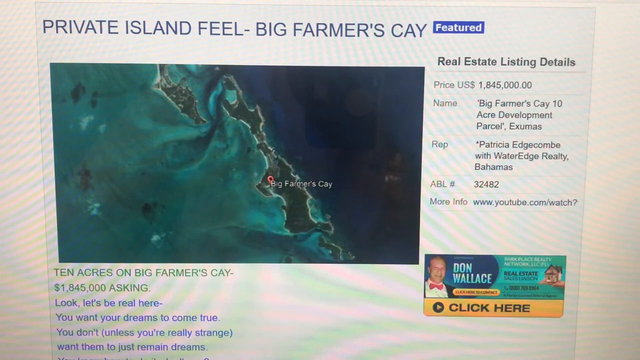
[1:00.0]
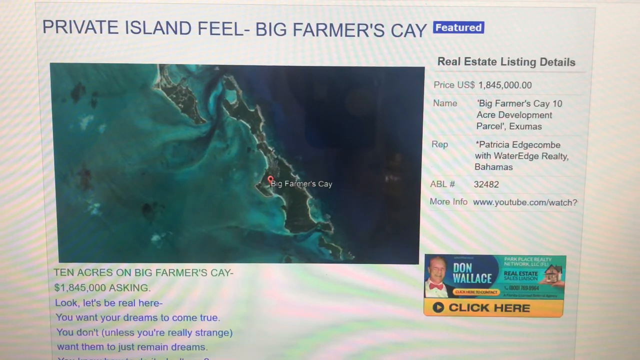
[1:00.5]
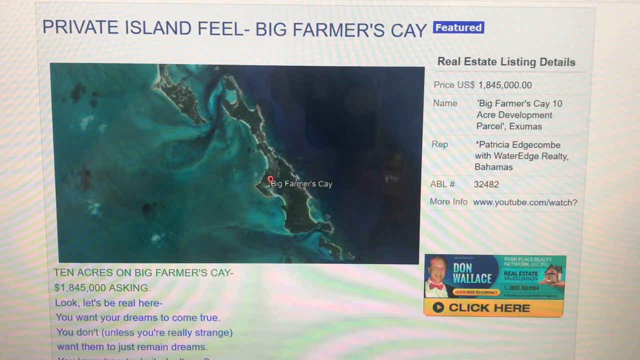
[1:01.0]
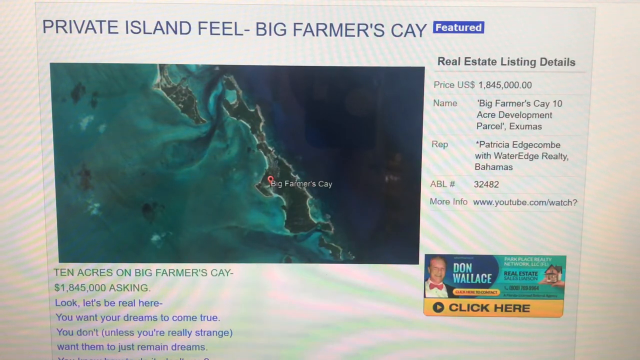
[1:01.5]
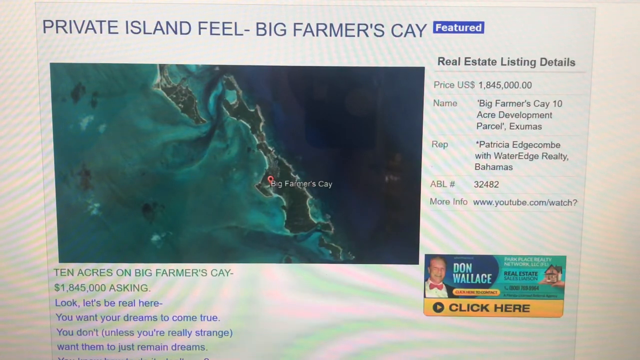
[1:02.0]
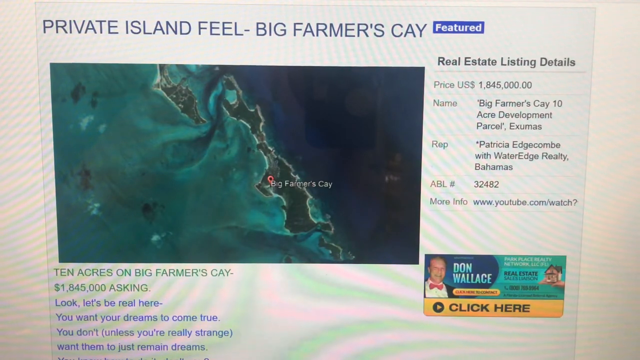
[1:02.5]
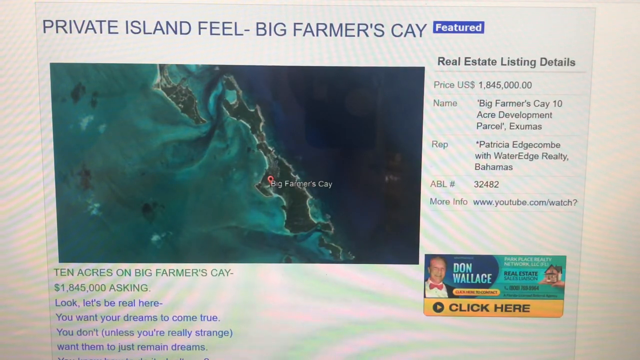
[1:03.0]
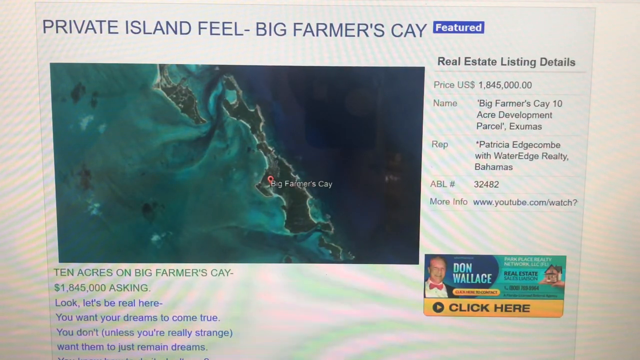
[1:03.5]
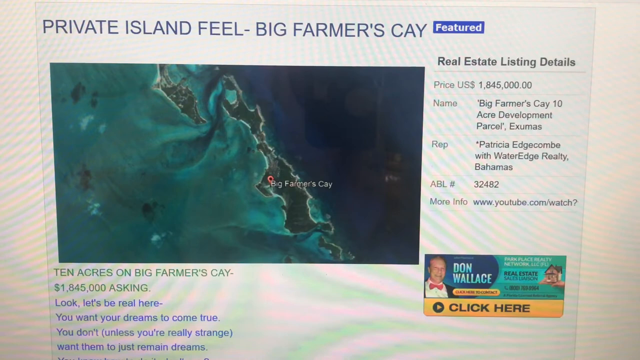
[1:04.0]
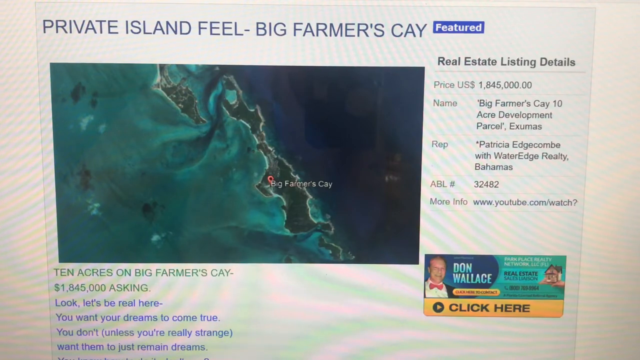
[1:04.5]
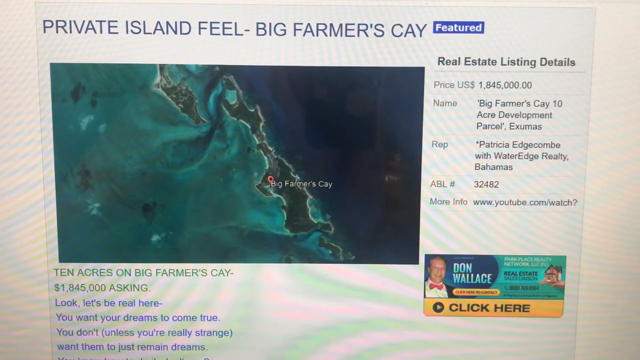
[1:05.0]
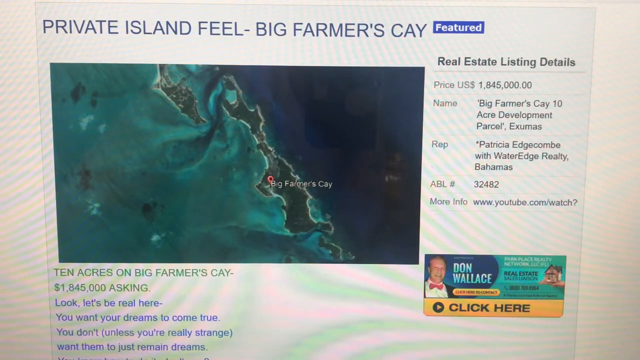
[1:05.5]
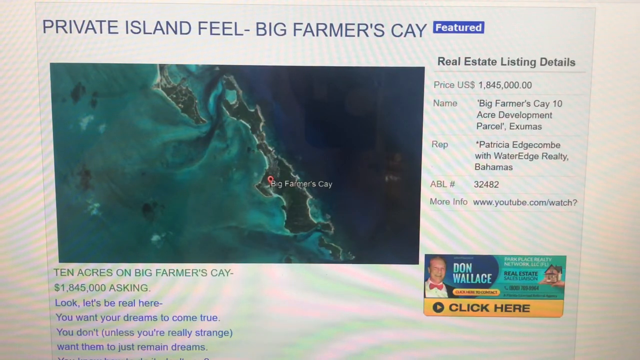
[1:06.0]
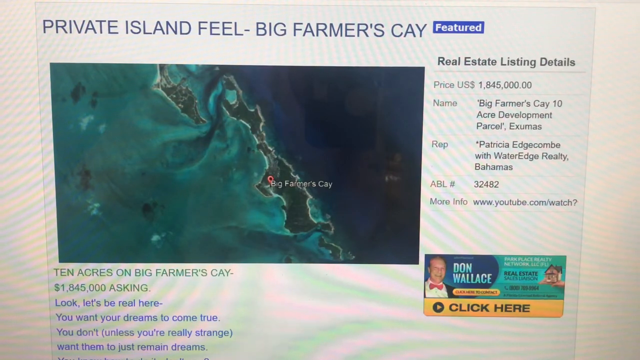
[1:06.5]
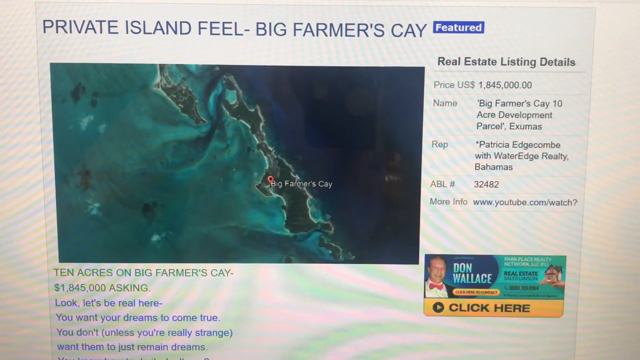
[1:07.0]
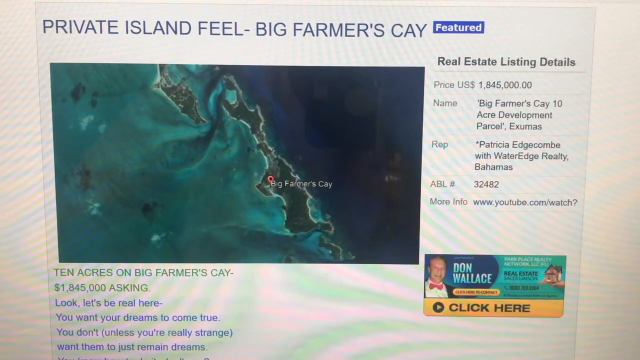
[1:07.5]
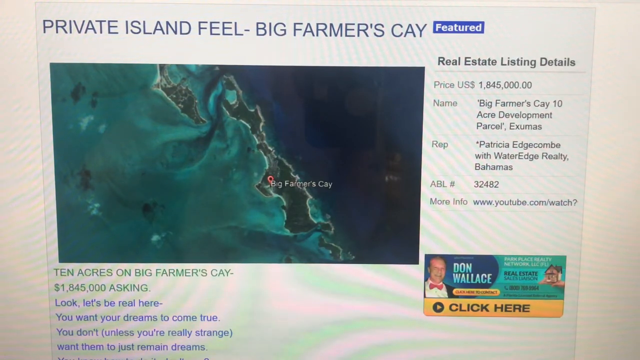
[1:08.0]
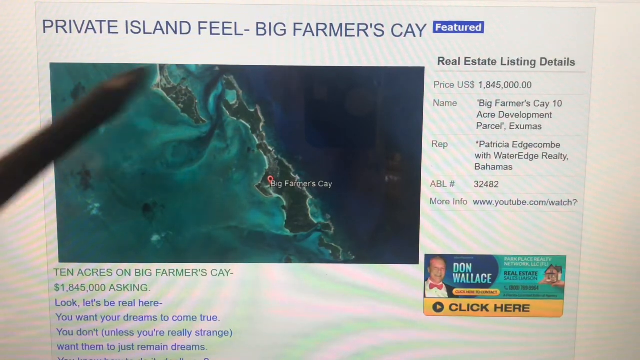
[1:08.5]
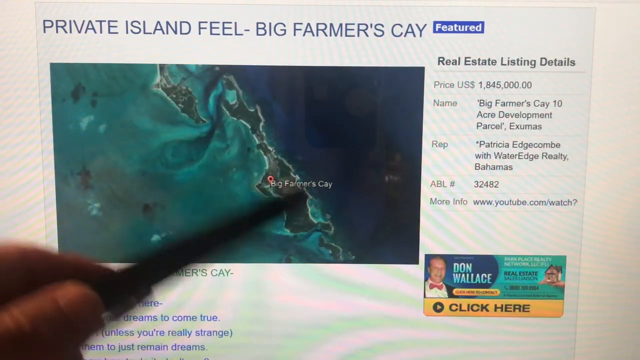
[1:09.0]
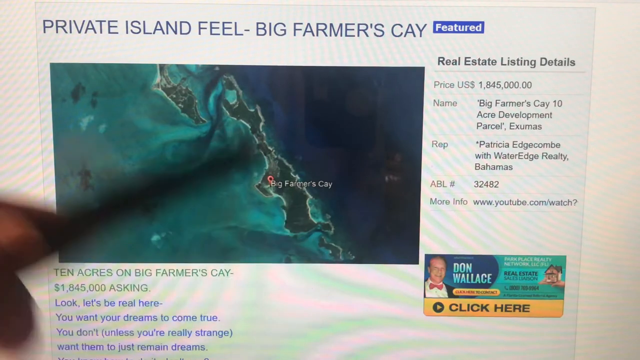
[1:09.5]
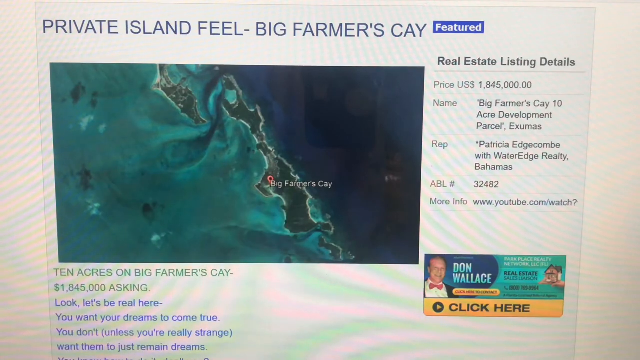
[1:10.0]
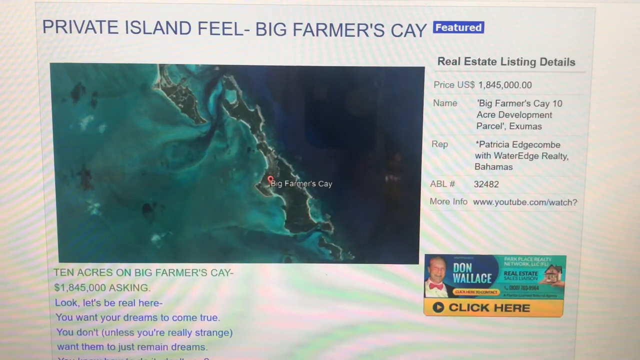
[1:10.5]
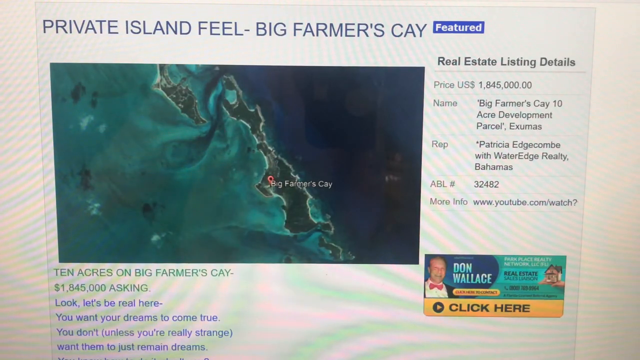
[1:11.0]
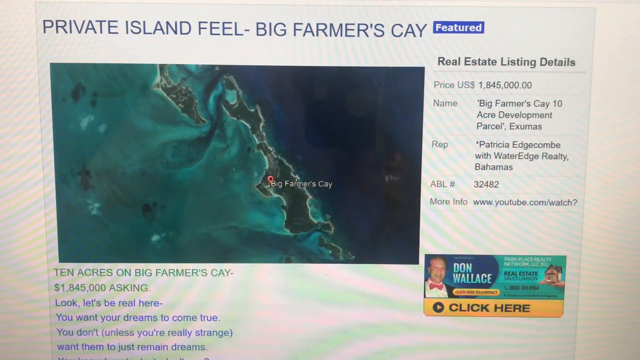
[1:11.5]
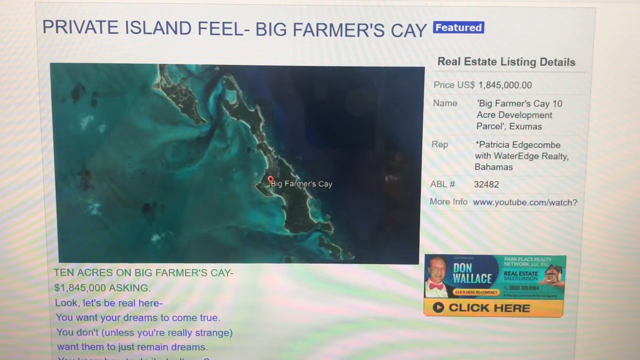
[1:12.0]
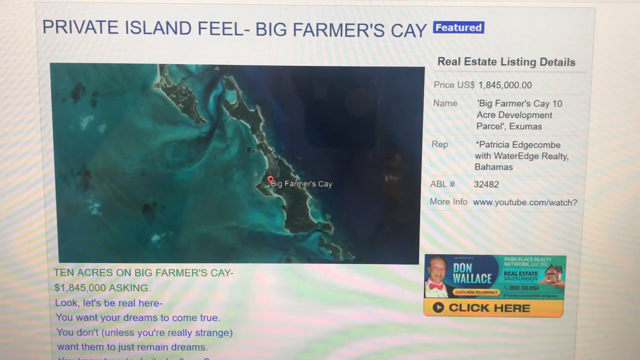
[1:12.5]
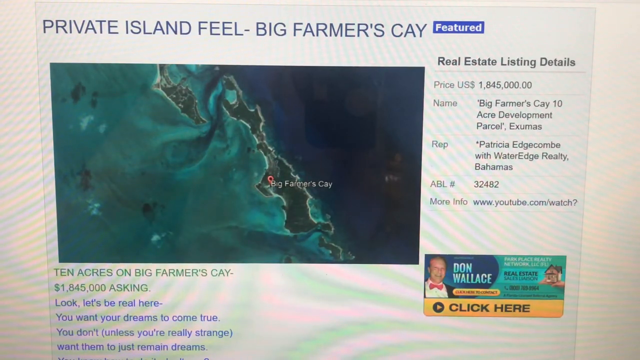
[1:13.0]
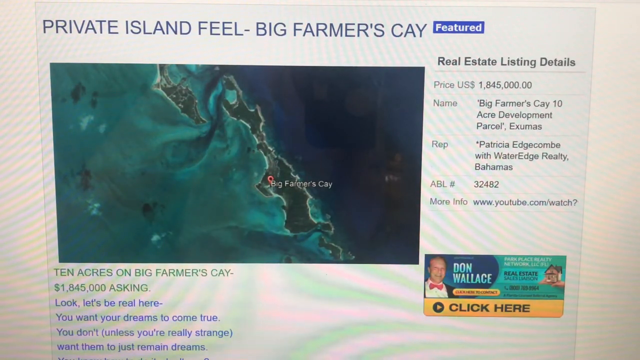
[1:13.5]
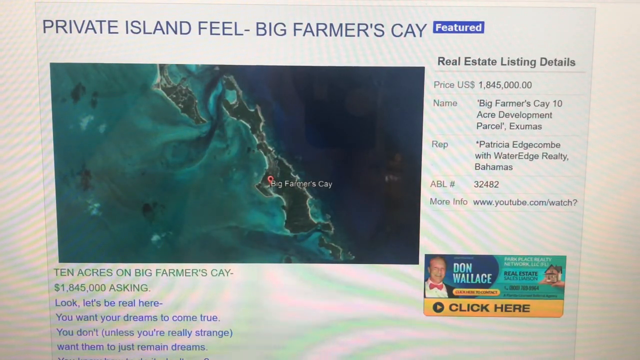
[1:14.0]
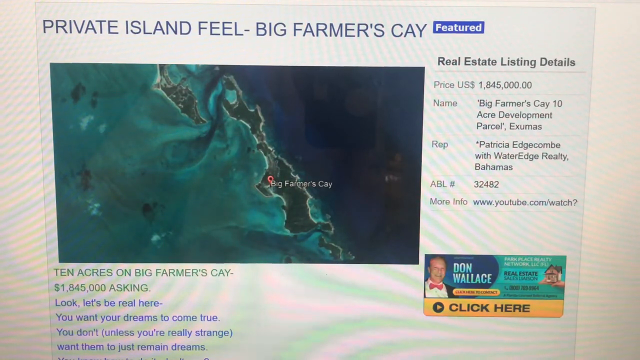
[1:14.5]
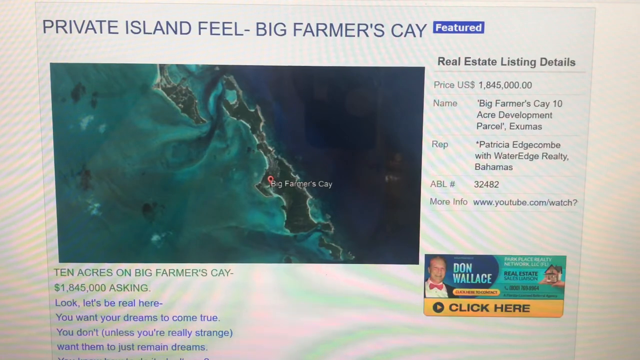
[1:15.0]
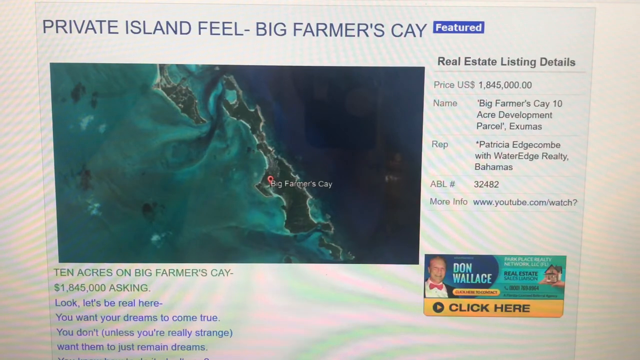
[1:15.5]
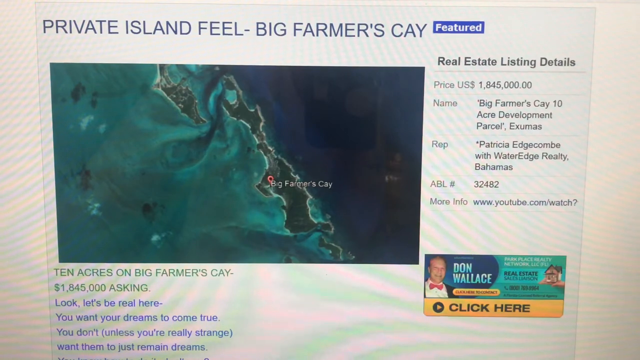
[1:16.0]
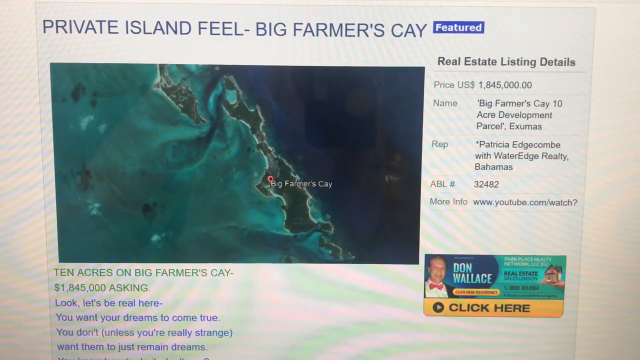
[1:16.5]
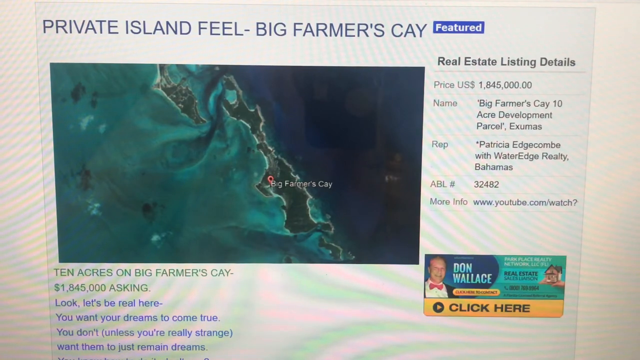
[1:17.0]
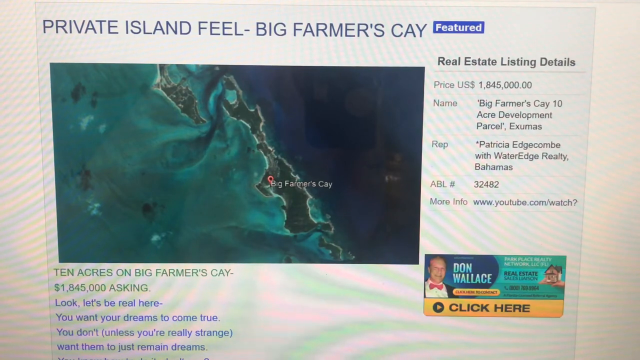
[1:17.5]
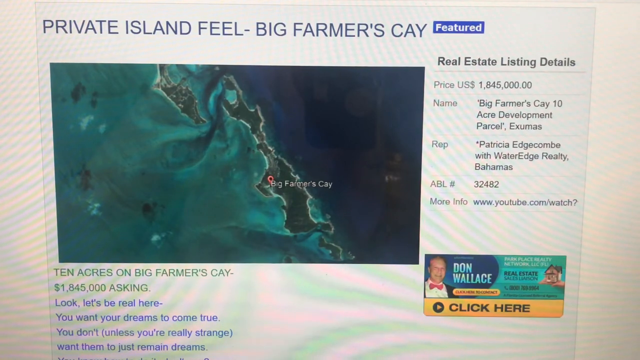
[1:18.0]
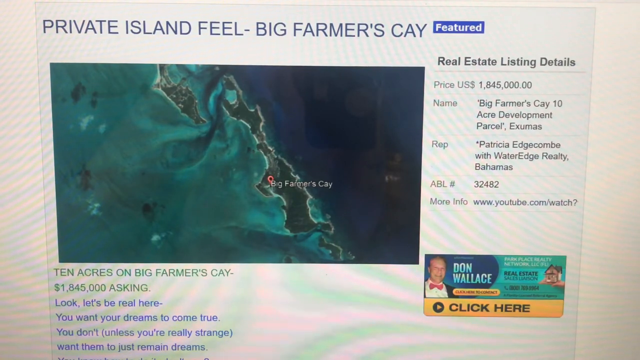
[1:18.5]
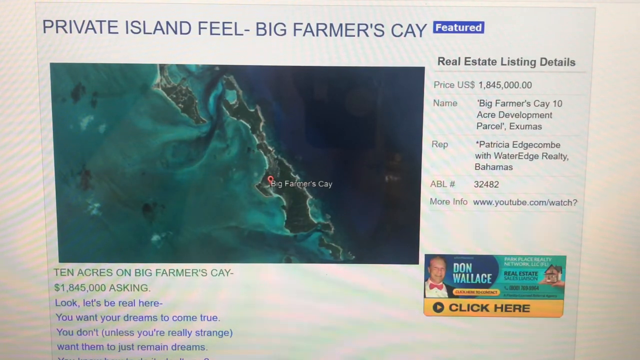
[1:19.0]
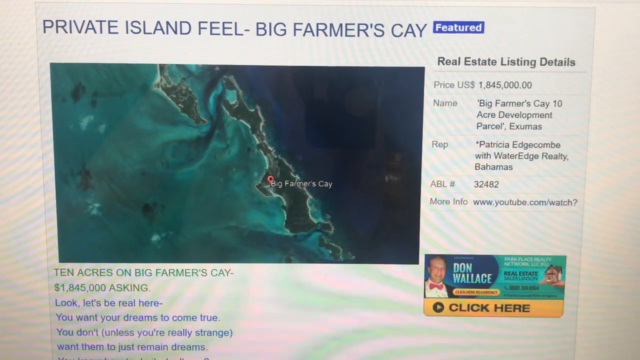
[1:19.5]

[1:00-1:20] The pen, held in the recording person's hand, moves from the lower right corner to almost the upper left corner and upward again, seemingly traversing the whole island to show its length and angle. A road or path appears to run through the steep part of the island rather than across it. Text on the right shows the island is in the Bahamas. The left side seems to have many smaller islands, while the right side appears to be ocean, with deeper colours and almost empty water. On the left part there is a bright green colour in the water.